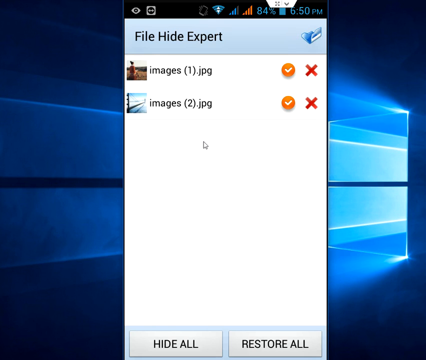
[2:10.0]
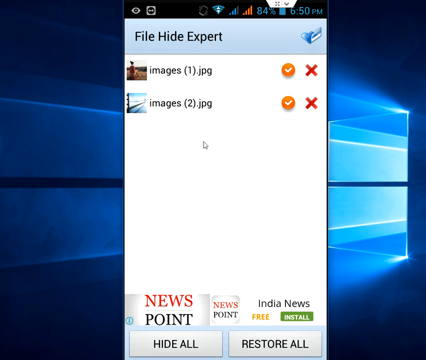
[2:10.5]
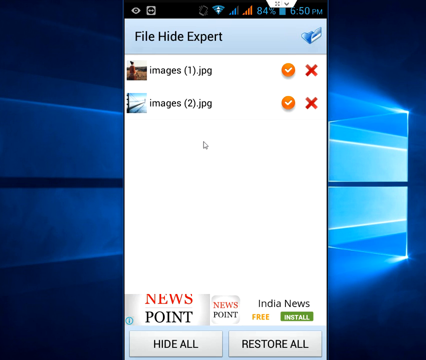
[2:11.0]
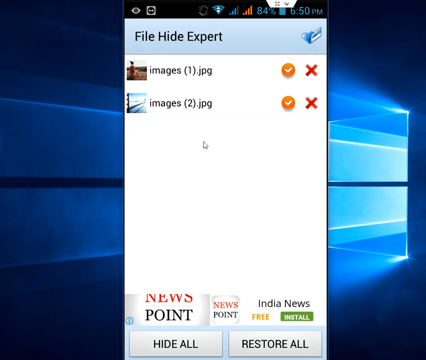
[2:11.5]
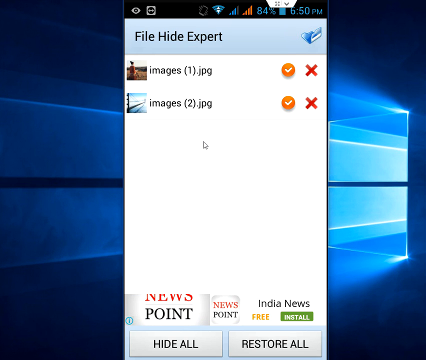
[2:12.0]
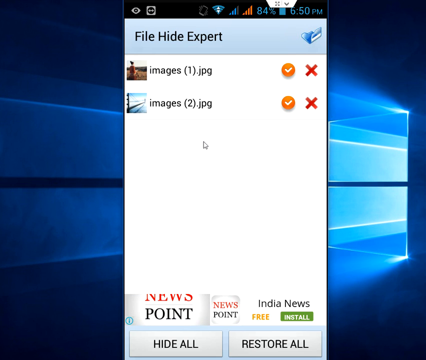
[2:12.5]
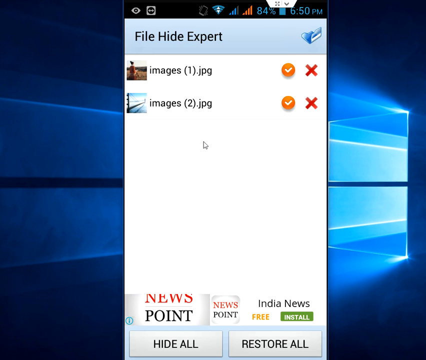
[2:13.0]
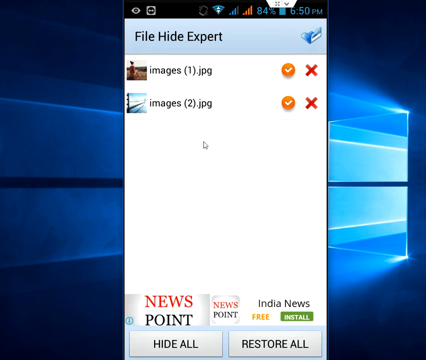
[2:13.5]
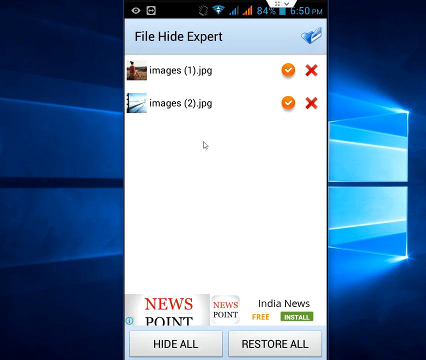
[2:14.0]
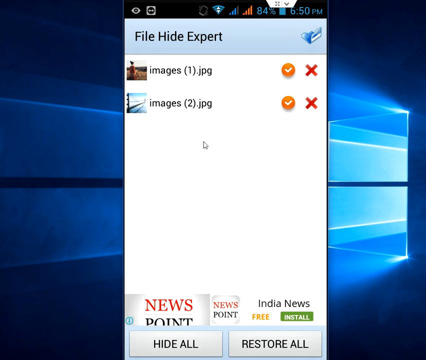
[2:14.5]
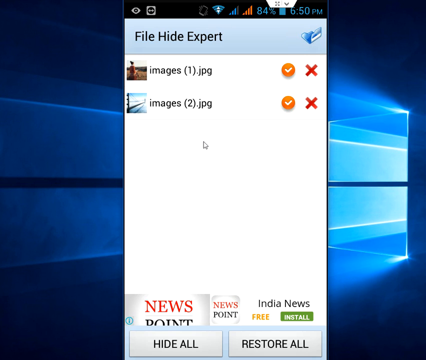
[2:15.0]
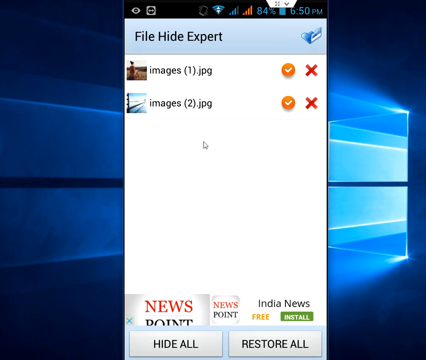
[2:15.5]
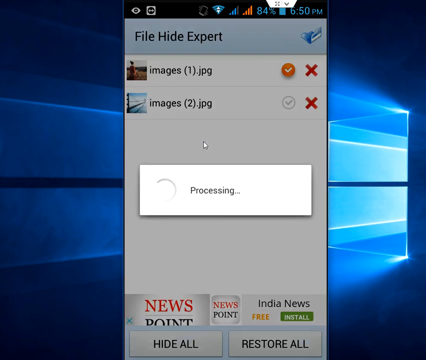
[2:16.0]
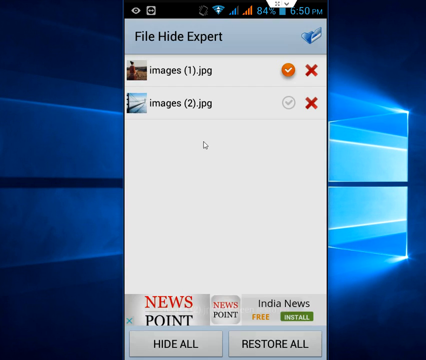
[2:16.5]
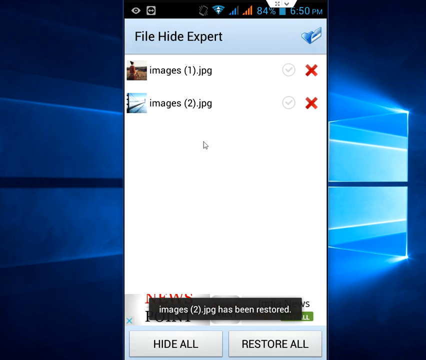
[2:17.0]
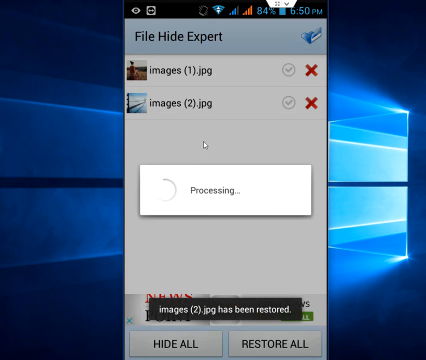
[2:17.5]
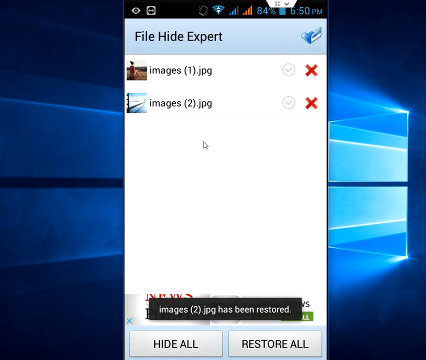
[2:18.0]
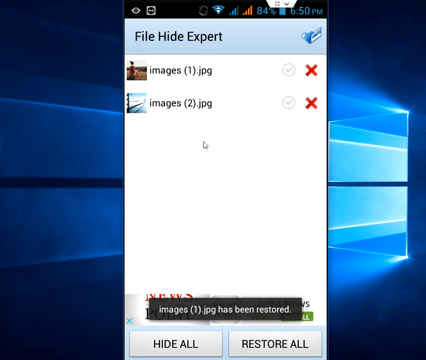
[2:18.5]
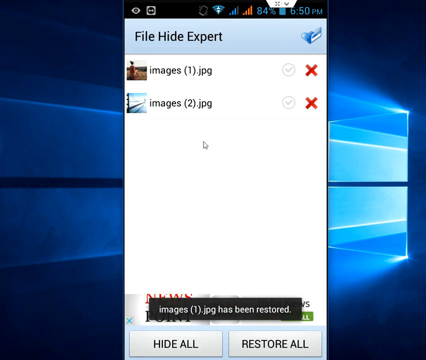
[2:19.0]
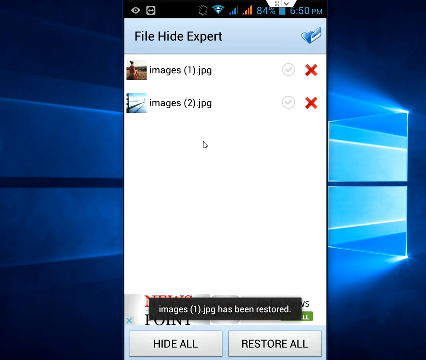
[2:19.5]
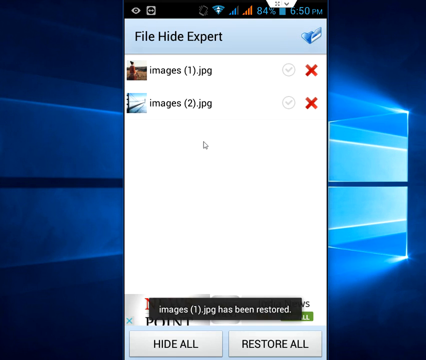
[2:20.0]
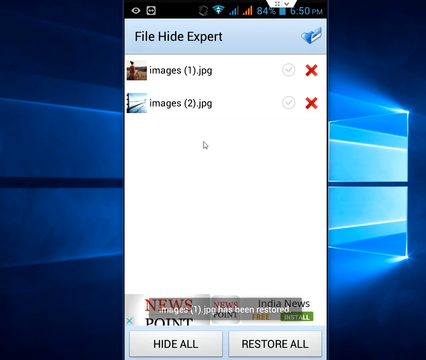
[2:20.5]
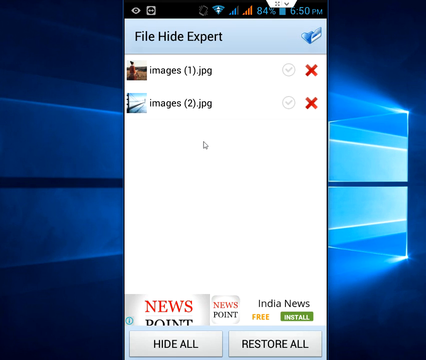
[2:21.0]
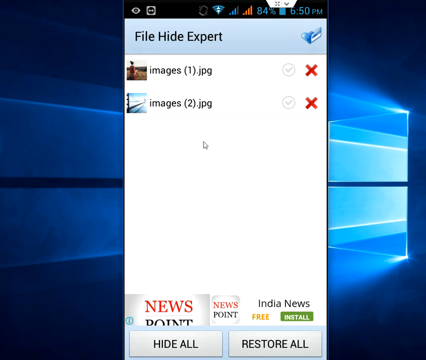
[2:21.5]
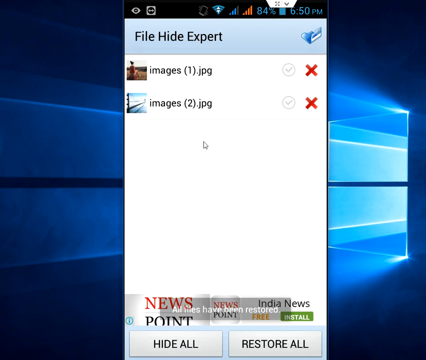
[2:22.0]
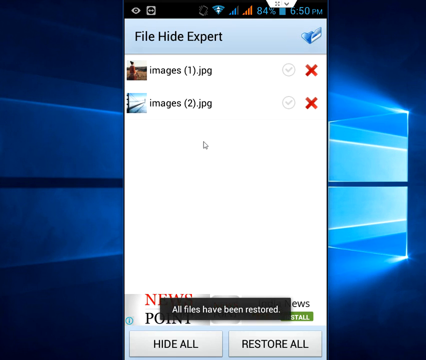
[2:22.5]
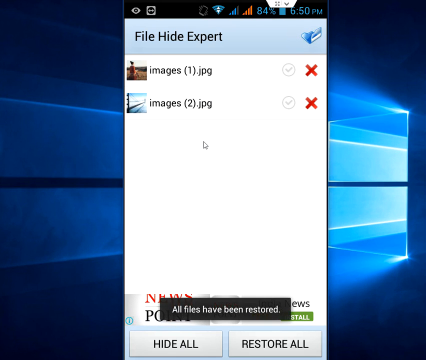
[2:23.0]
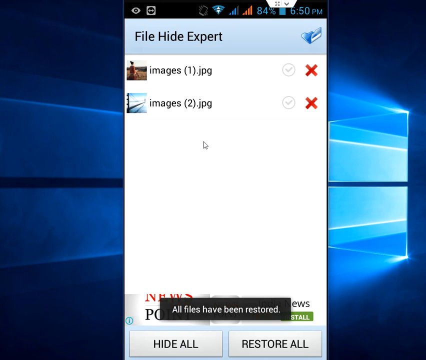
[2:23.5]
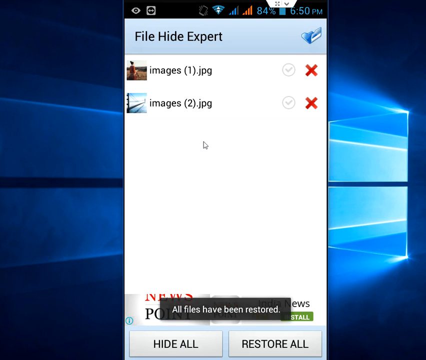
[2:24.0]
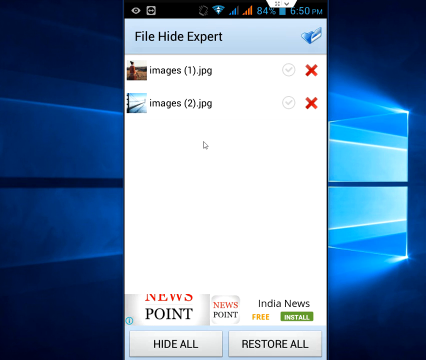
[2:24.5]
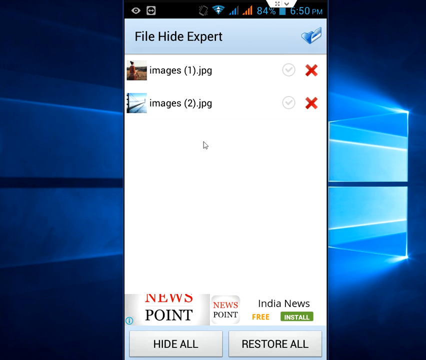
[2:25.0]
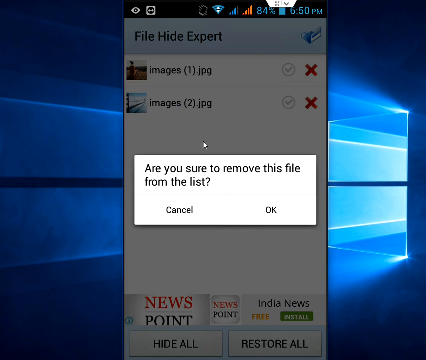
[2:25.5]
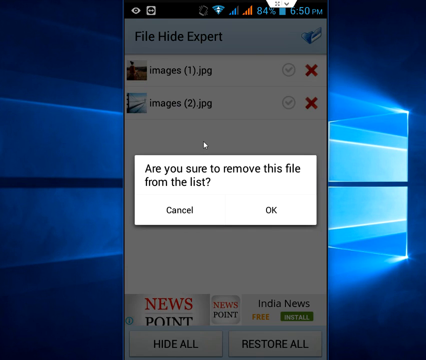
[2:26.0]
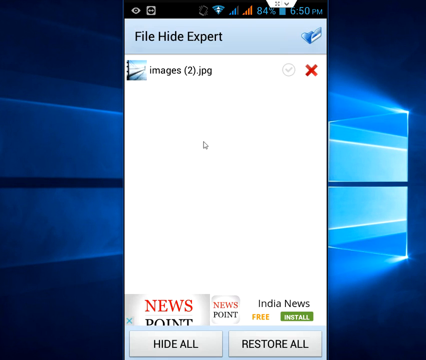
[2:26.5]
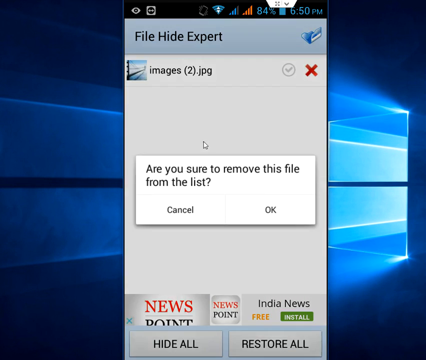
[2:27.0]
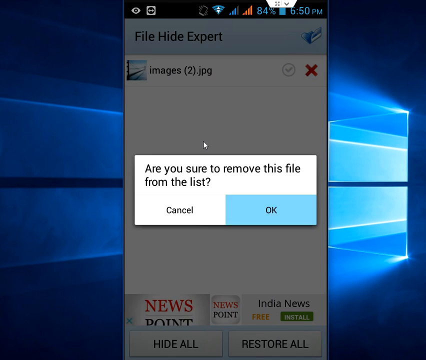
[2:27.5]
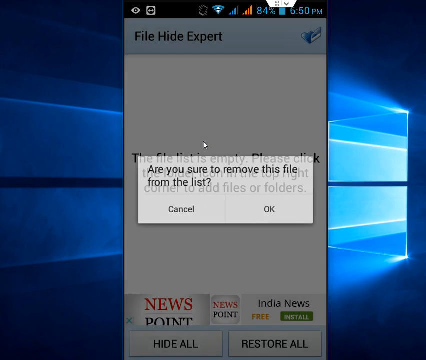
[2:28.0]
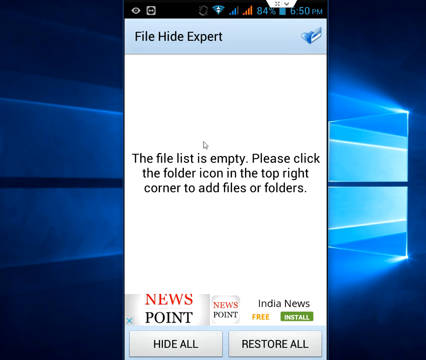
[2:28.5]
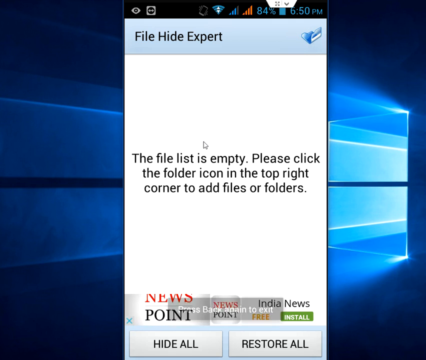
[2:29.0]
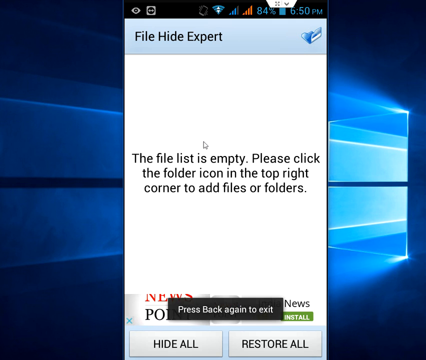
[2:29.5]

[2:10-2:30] The File Hide Expert folder shows the two images. The mouse is placed below the last image listing, slightly toward the center, and hovers there for a while. A small "processing" pop-up appears briefly toward the center of the screen and disappears, and a small black box at the bottom reads "images (2).jpg has been restored." Processing appears for a quick second, then the bottom reads "images 1.jpg has been restored," which disappears. Processing appears once more, followed by a box at the bottom reading "all files have been restored." A notification then pops up in the center of the screen reading "are you sure to remove this file from the list?" The user selects OK and returns to the File Hide Expert folder, which has no contents.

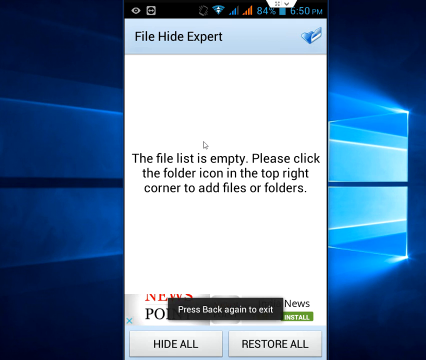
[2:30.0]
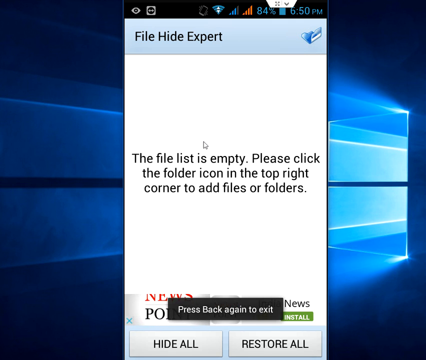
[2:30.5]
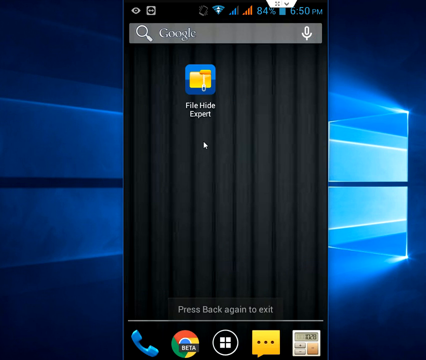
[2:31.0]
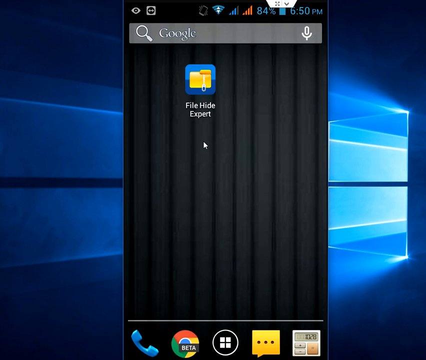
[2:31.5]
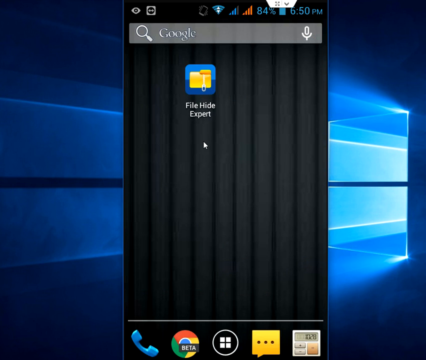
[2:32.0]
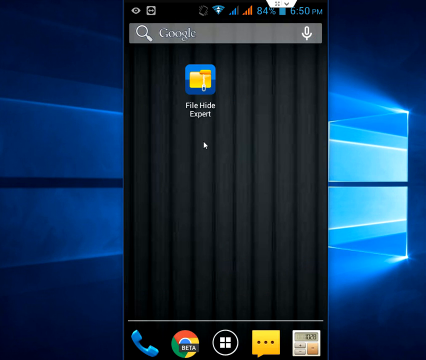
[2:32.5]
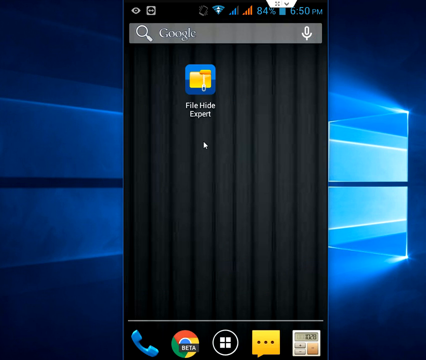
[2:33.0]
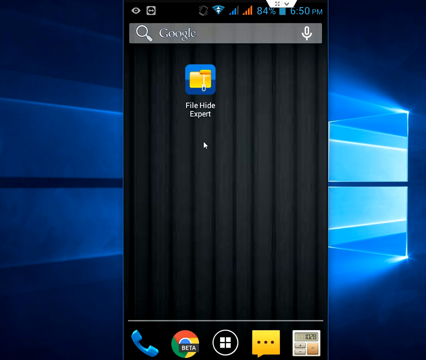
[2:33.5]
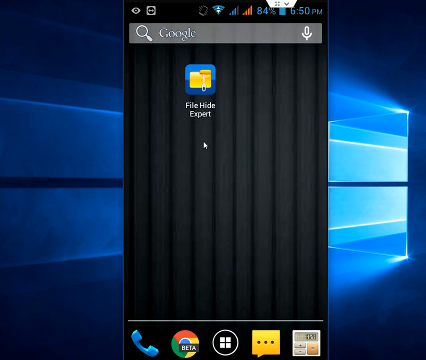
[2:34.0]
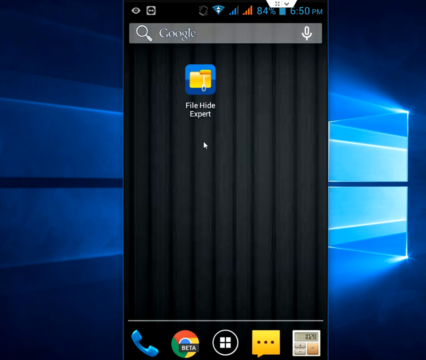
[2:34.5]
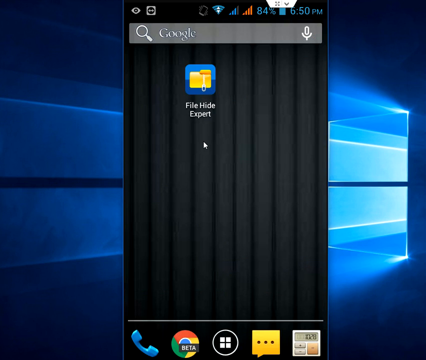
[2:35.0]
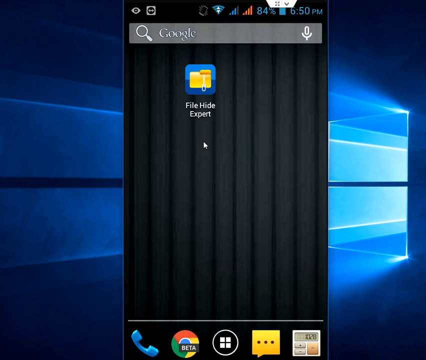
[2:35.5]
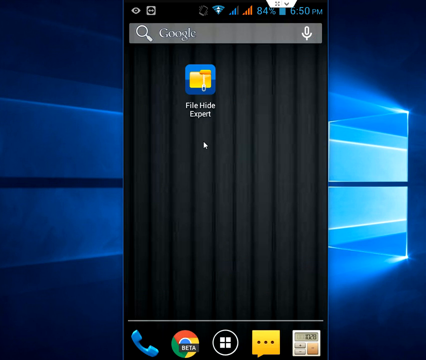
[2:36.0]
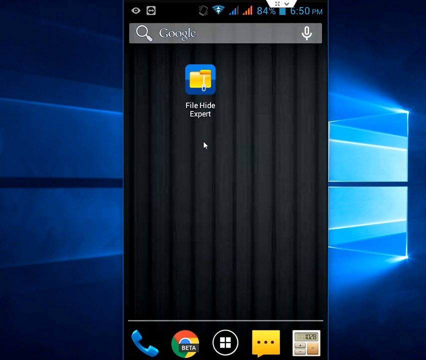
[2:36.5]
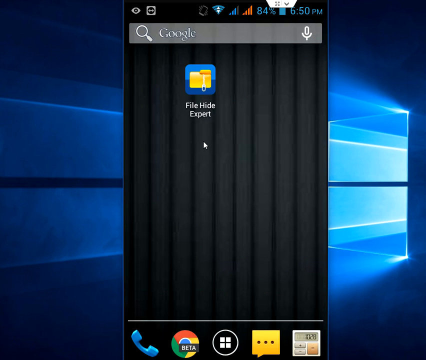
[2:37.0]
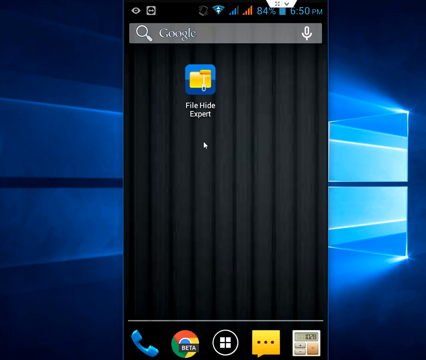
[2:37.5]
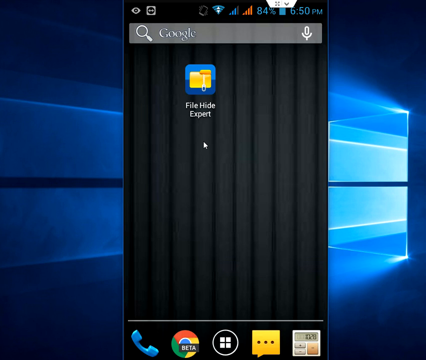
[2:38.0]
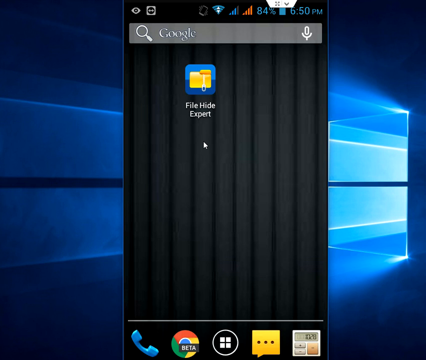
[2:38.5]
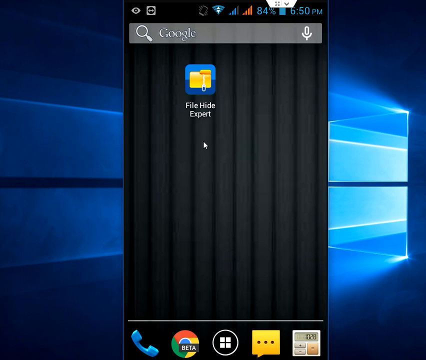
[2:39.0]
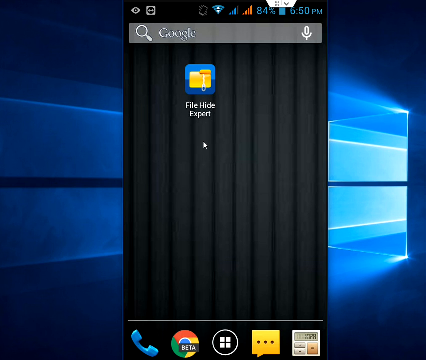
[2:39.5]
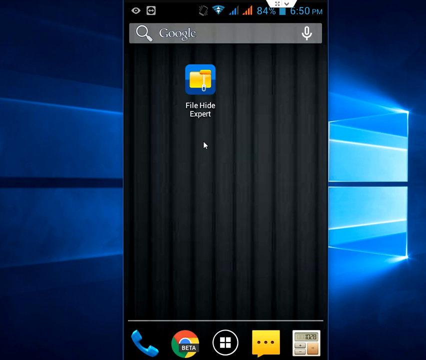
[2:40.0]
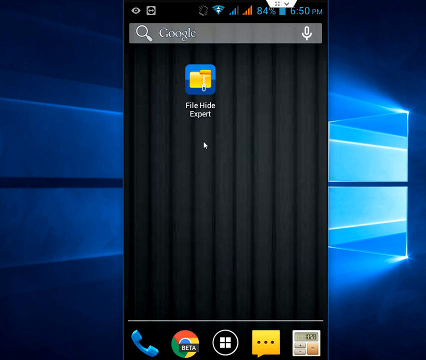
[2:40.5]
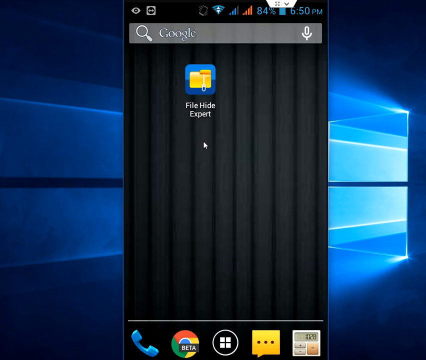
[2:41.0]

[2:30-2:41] The empty File Hide Expert screen shows the text "the file list is empty, please click the folder icon in the top right corner to add files or folders," with a small black pop-up box at the bottom reading "press back again to exit." The screen jumps back to the home screen with the File Hide Expert icon, with the mouse slightly below the icon. The video remains on the screenshot of the Android phone on the Windows desktop, whose stock wallpaper is blue light tunnel imagery.